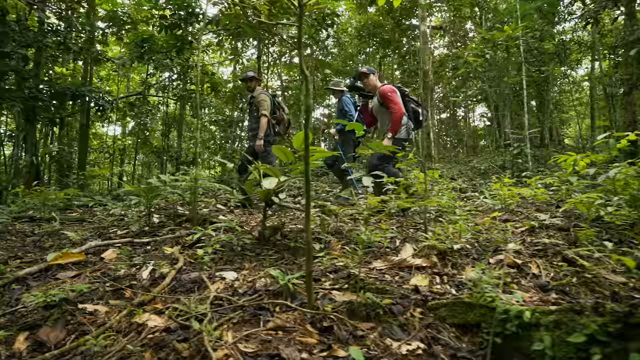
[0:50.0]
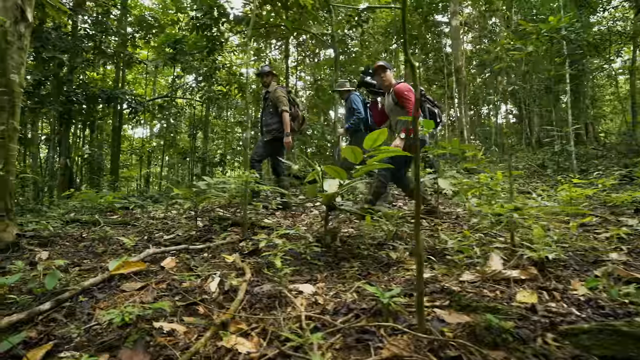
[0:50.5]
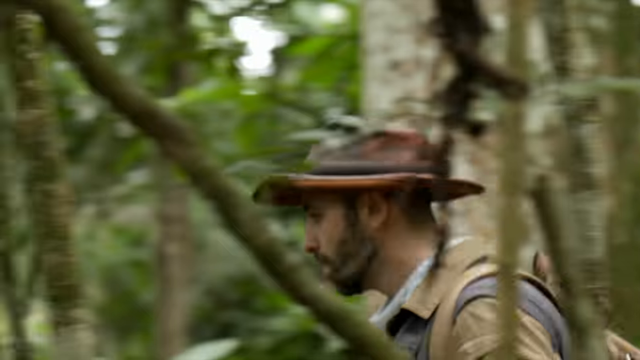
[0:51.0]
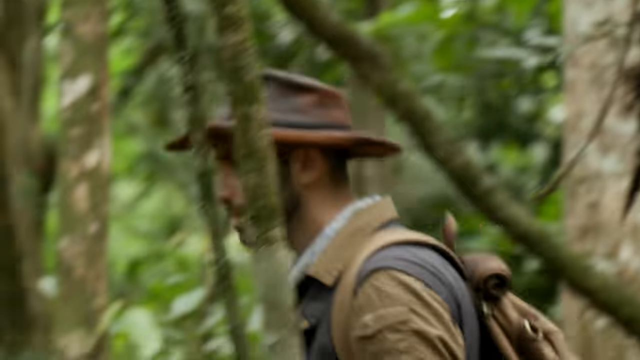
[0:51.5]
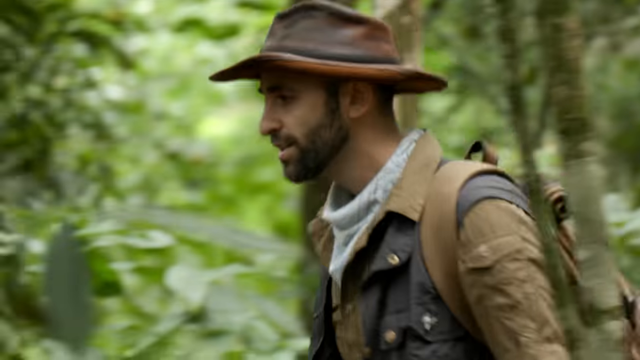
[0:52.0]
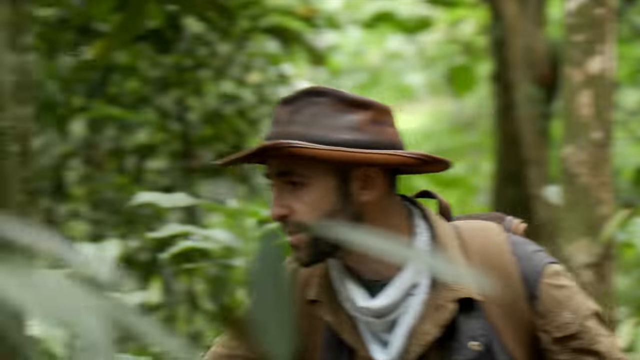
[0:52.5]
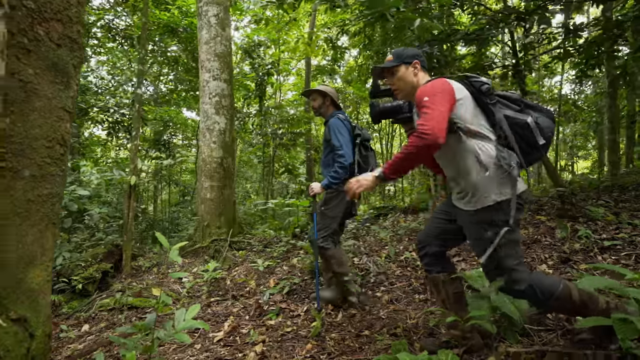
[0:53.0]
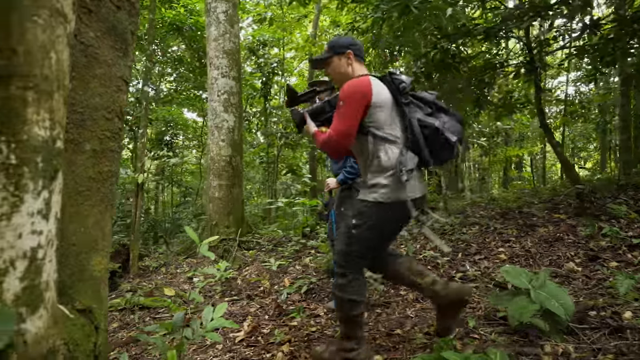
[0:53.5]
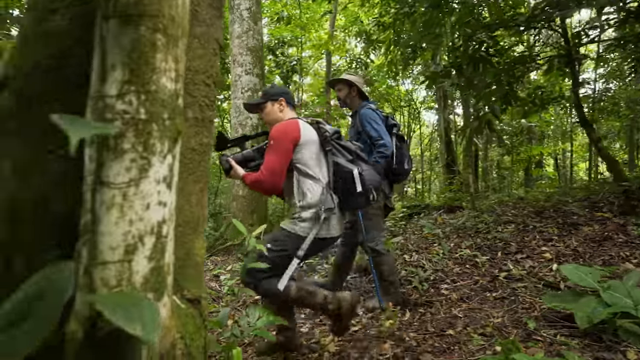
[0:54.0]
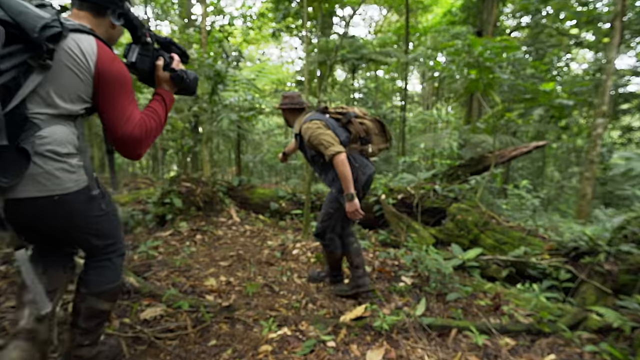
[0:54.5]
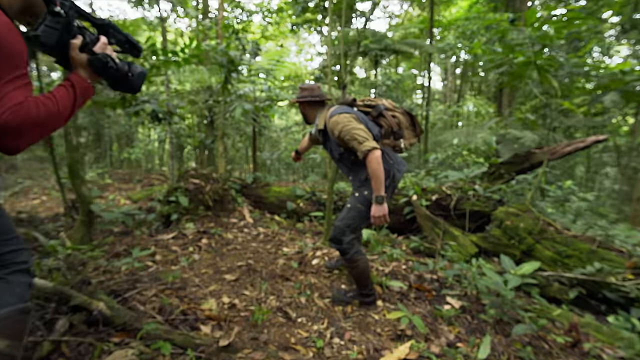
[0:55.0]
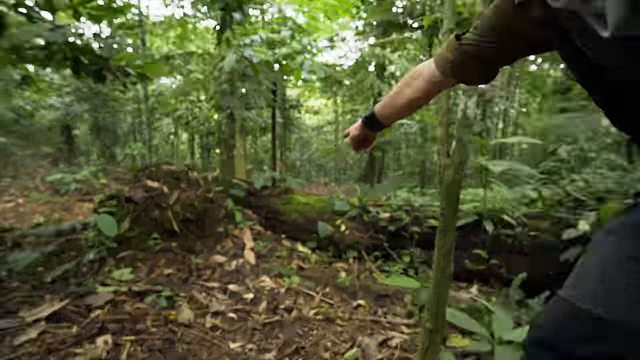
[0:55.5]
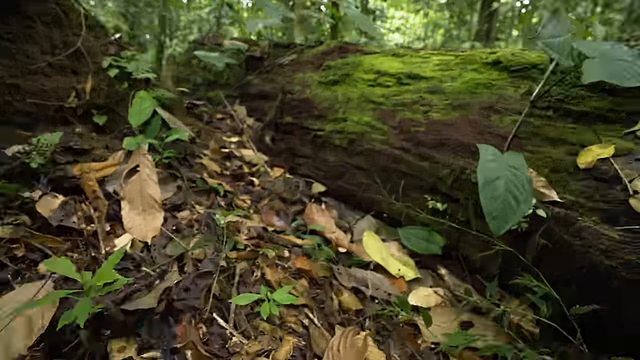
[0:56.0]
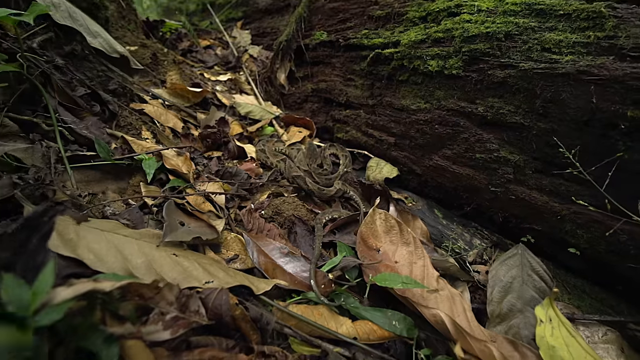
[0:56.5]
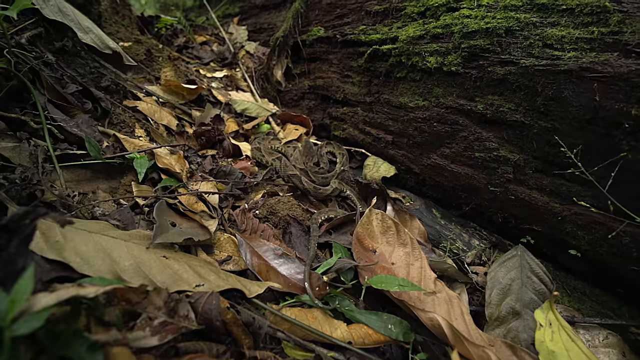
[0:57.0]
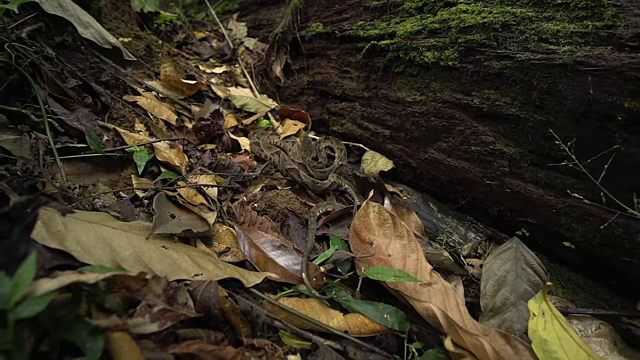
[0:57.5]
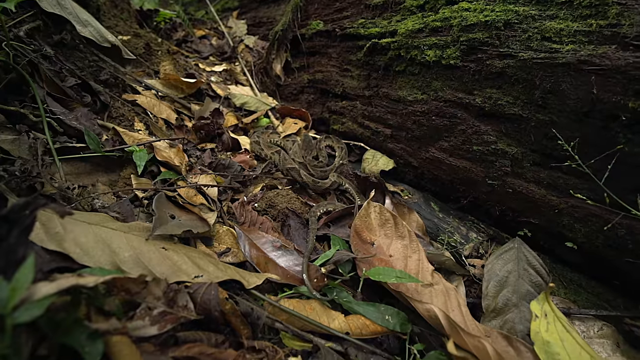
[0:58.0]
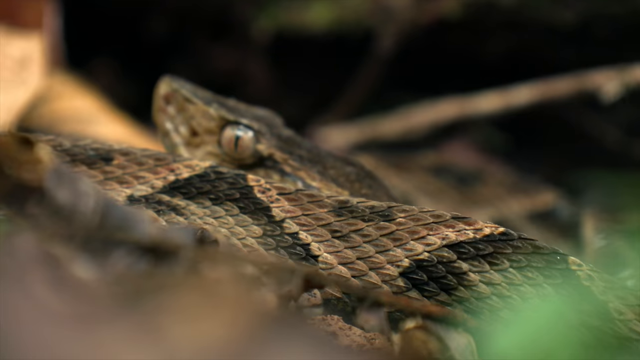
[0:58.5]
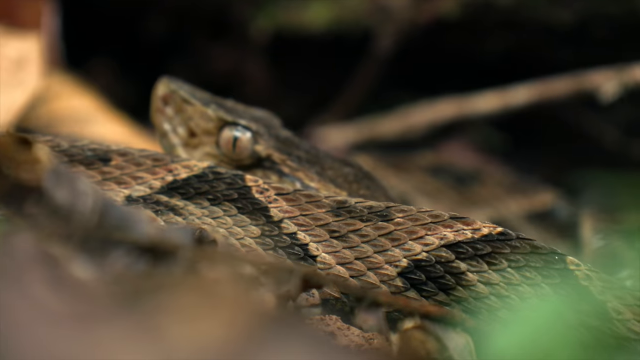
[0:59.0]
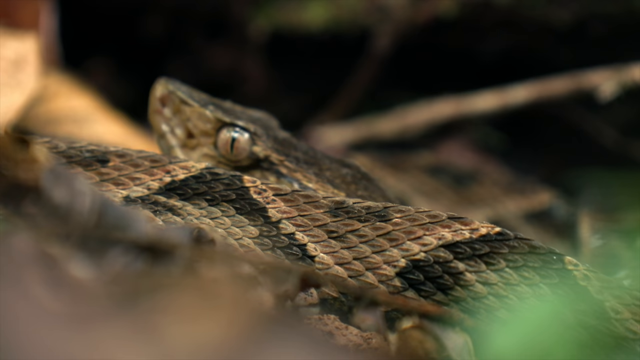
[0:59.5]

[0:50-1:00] At least three men move through a forest or jungle in a very lush environment, where everything is green, with different types of plants and trees. They walk along a path covered by tree branches, so they are in the shadow; the sun is not shining directly on them, but it is sunny with clear skies. One of the people points to something, the cameraman moves in quickly and zooms in with the camera, and they have found a snake hiding between kind of a log and some leaves on the ground, very well camouflaged.